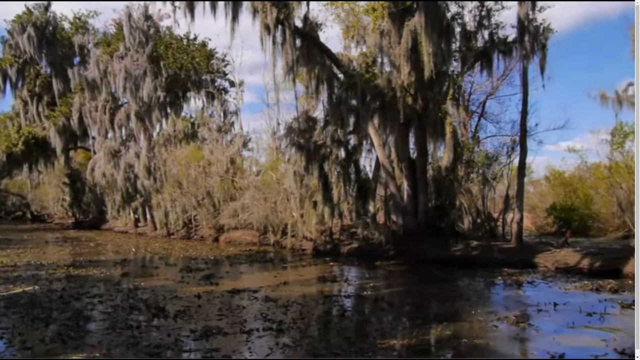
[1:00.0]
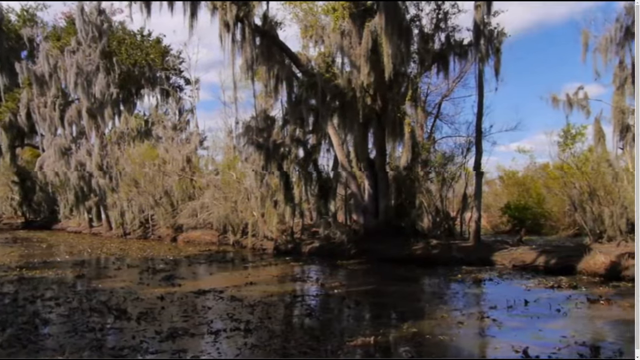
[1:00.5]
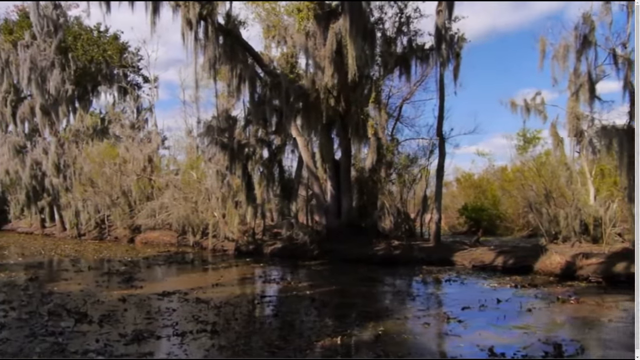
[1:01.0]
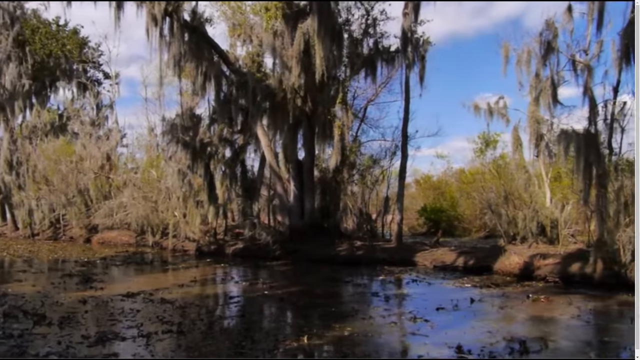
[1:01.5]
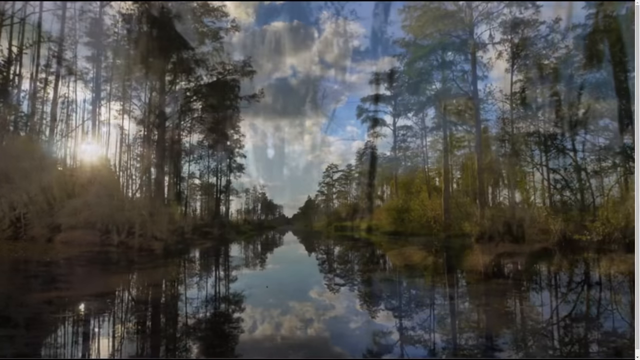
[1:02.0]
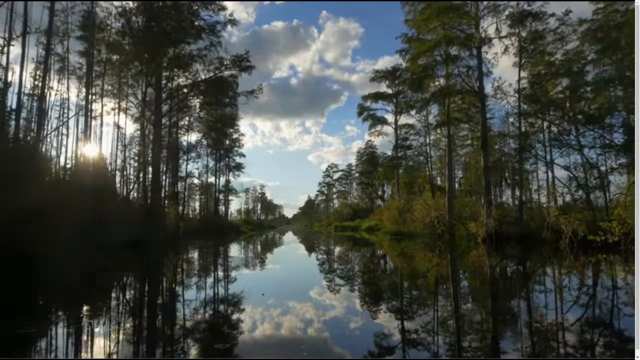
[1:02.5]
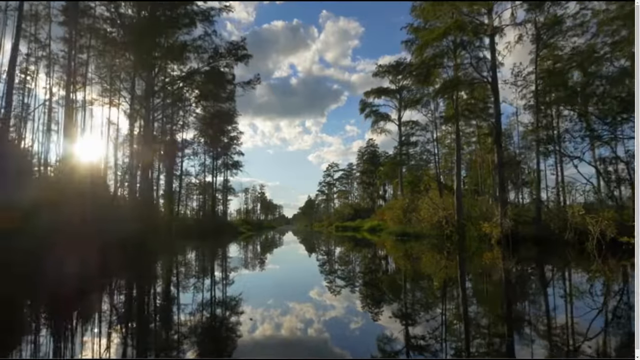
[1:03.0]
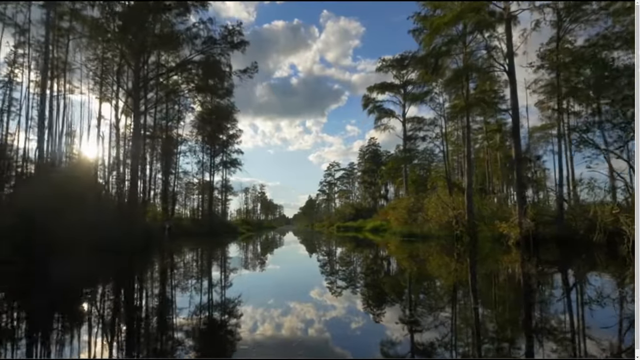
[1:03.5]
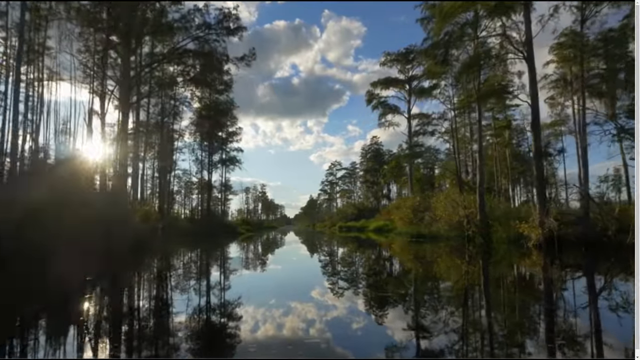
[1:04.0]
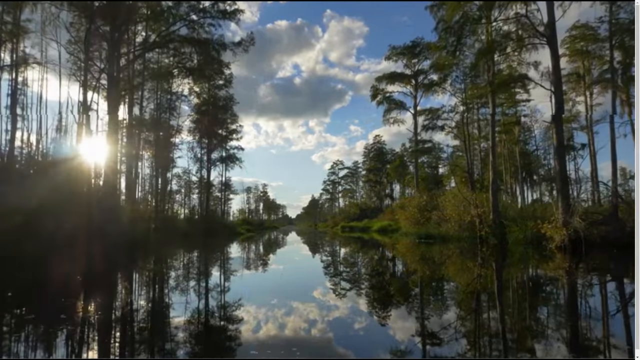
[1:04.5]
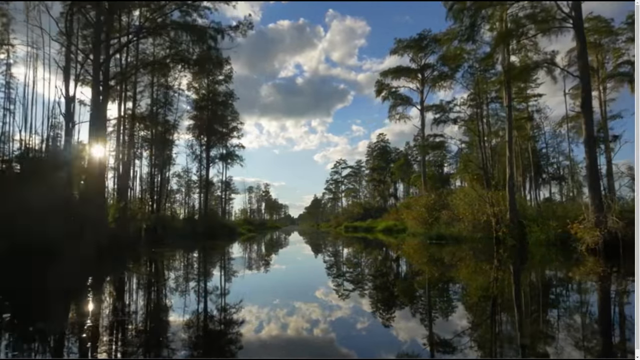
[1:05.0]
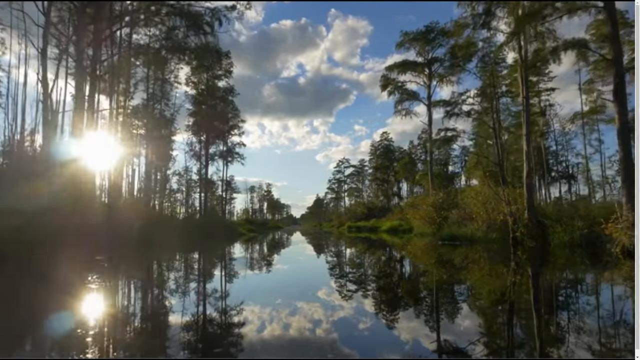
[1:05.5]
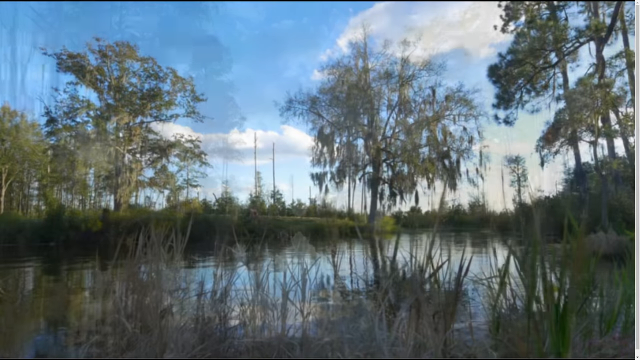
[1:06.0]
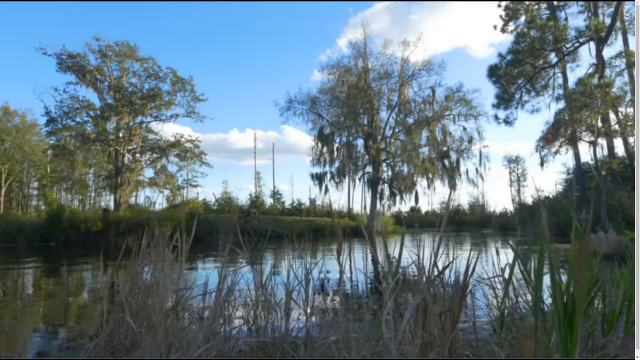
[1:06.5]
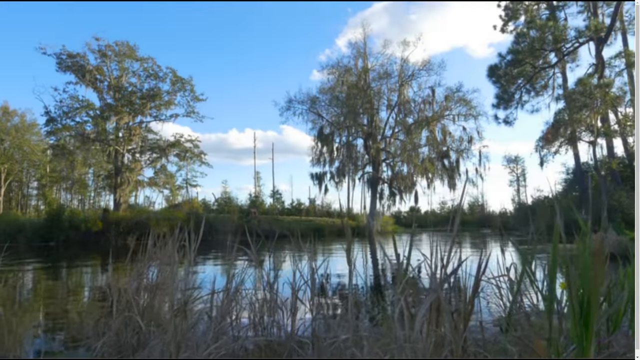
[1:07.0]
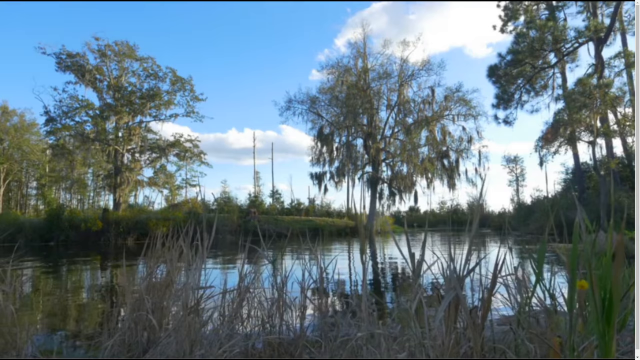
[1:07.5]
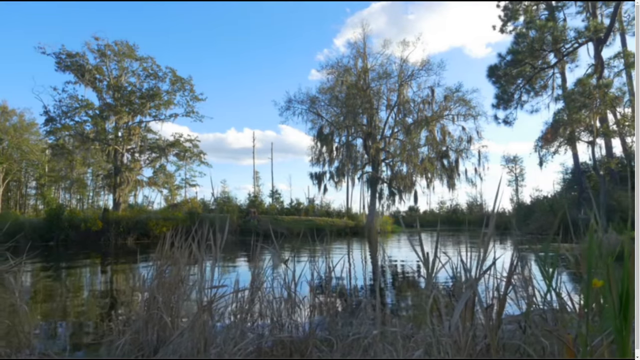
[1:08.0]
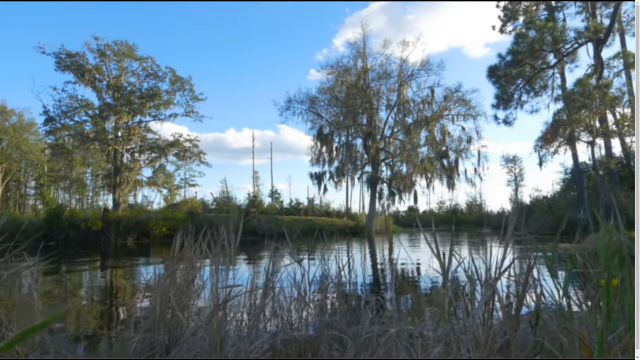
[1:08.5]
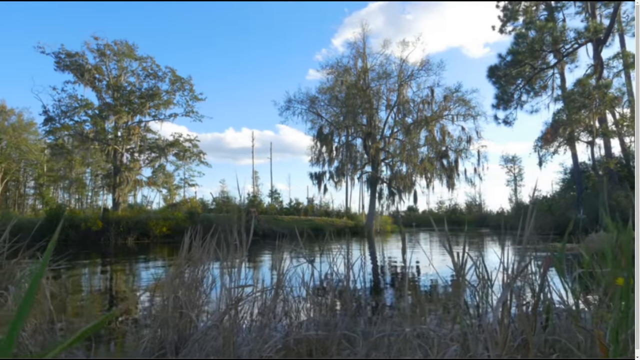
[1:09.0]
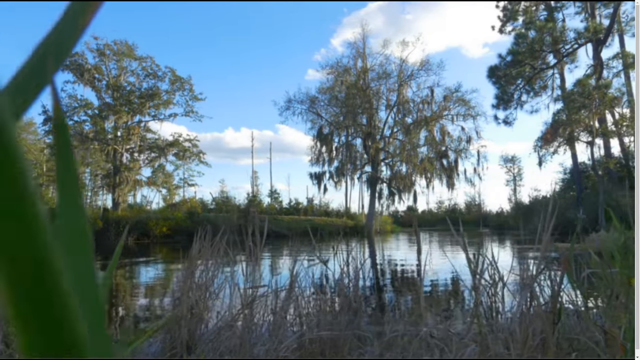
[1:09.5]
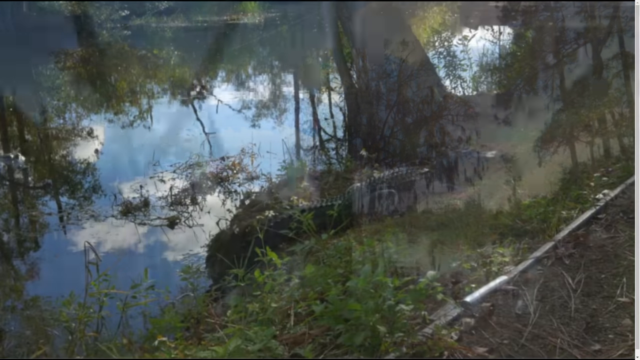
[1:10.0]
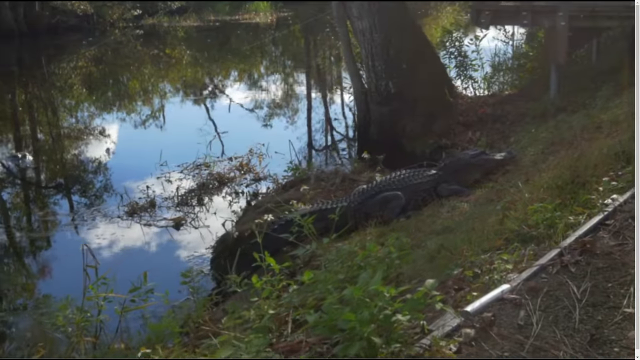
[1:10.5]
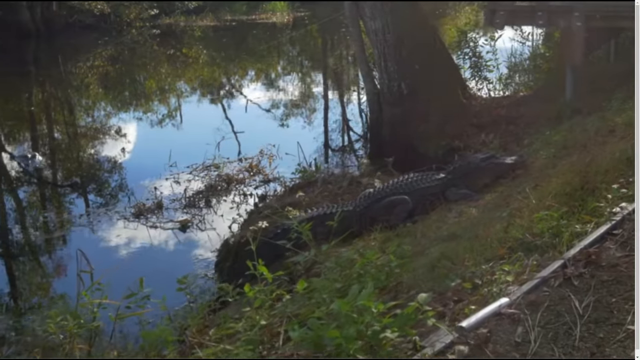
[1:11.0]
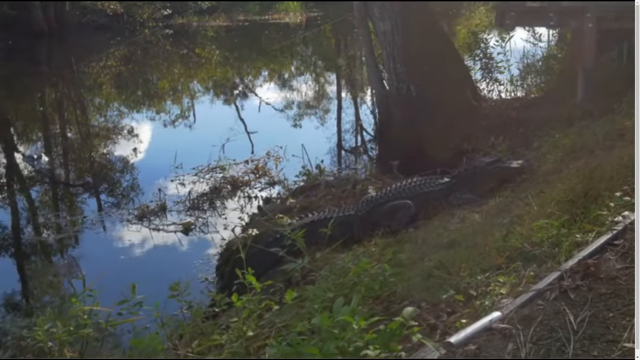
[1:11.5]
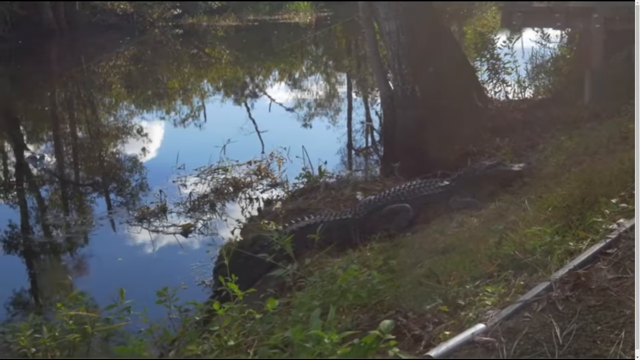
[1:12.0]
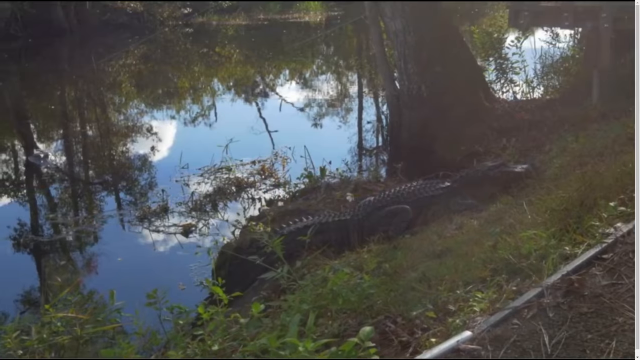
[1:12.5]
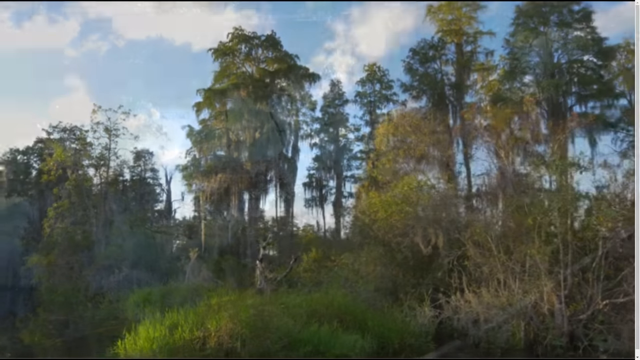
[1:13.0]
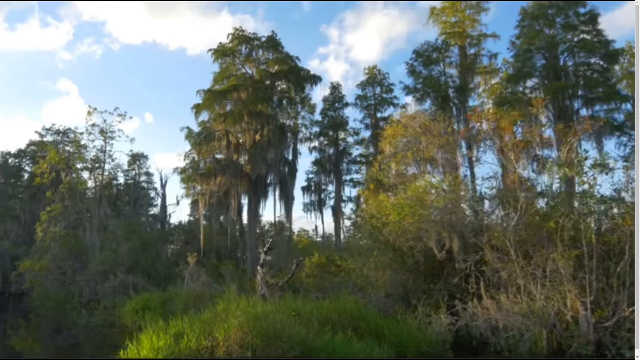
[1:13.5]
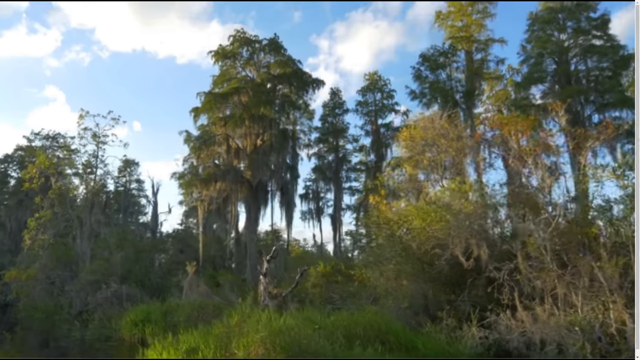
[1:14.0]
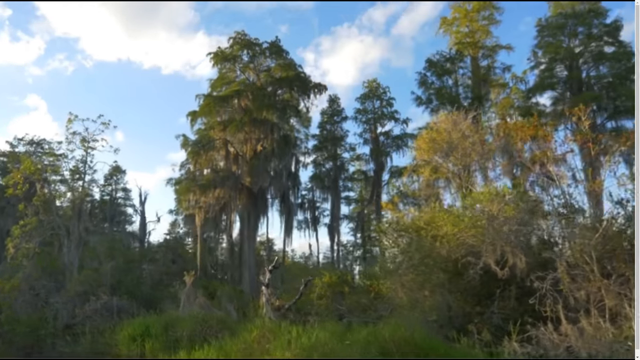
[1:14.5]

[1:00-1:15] The scene appears to transition slowly from the swamp area to a clearer but still swampy-looking area. Many different forms of trees seem to be shown, and there is a lot more grass. More of the trees rise up into the air, with some growing out of the water and others growing from ground that is above the water. White clouds and a bright blue sky remain in the background. The plants are all in varying shades of green, some darker and some lighter.